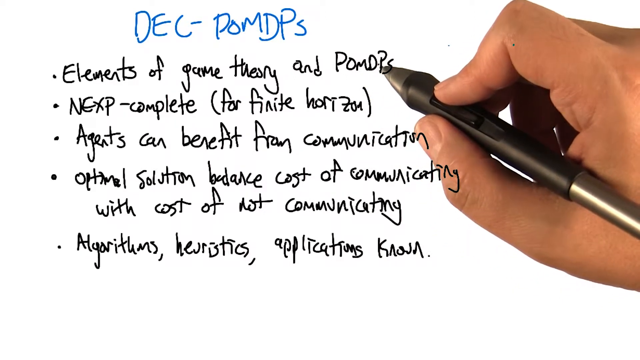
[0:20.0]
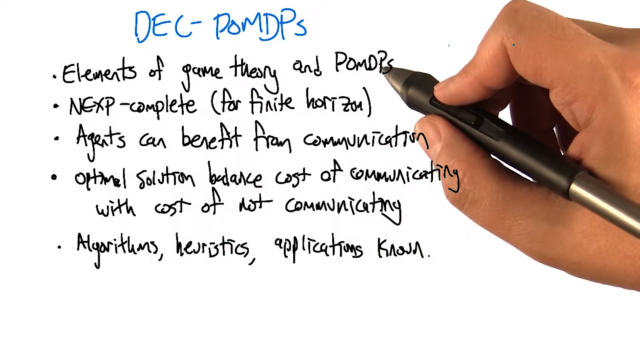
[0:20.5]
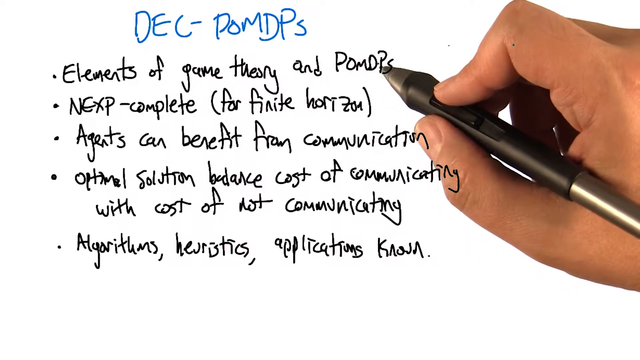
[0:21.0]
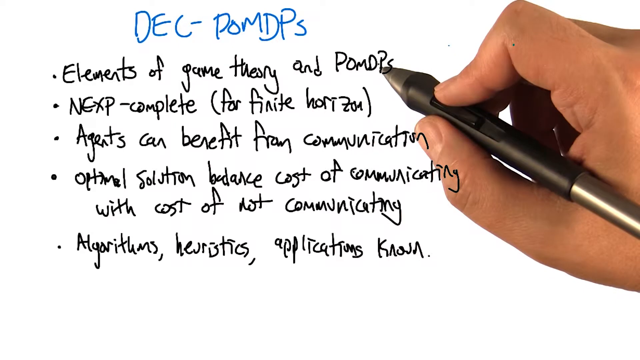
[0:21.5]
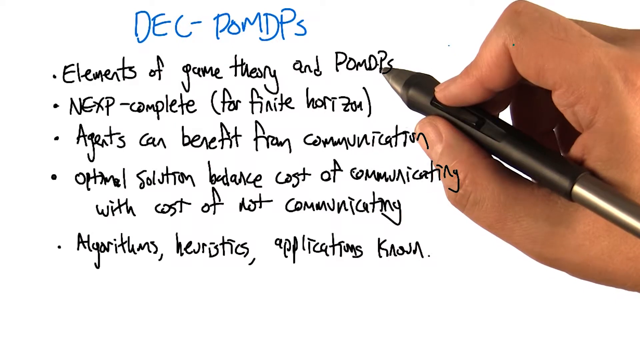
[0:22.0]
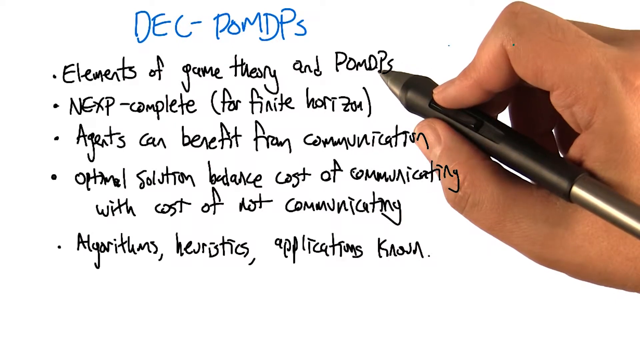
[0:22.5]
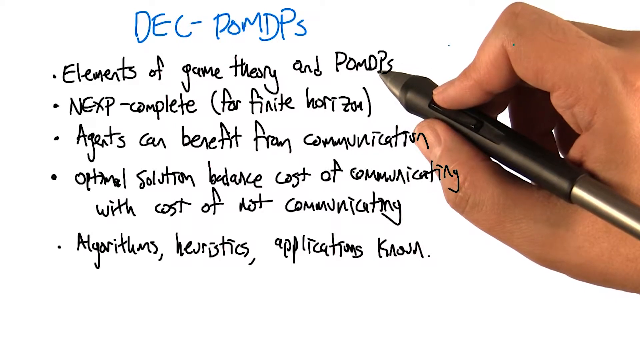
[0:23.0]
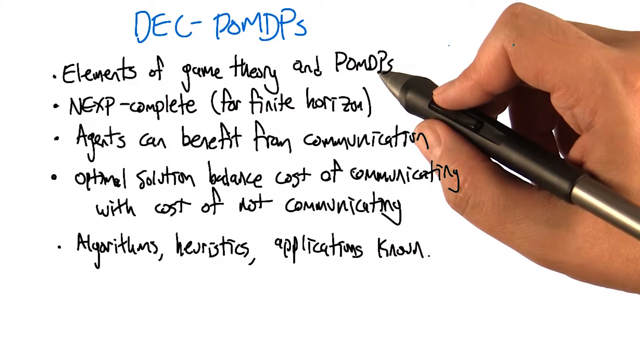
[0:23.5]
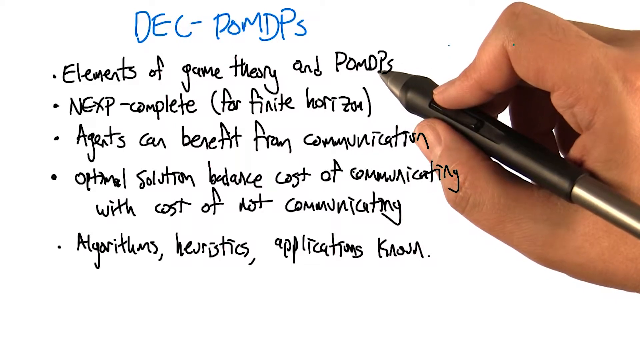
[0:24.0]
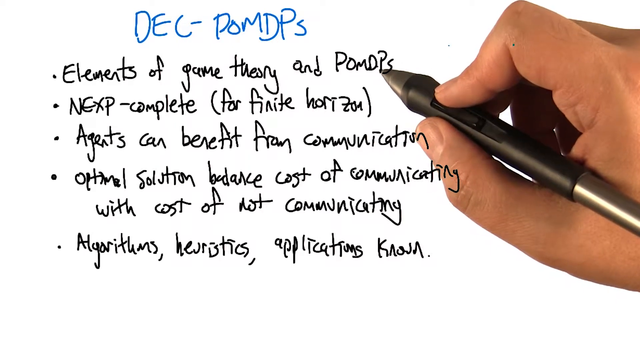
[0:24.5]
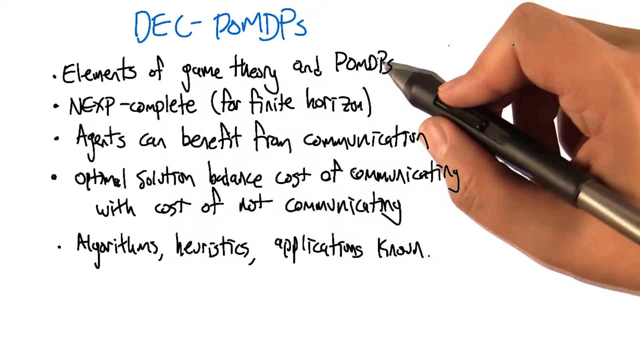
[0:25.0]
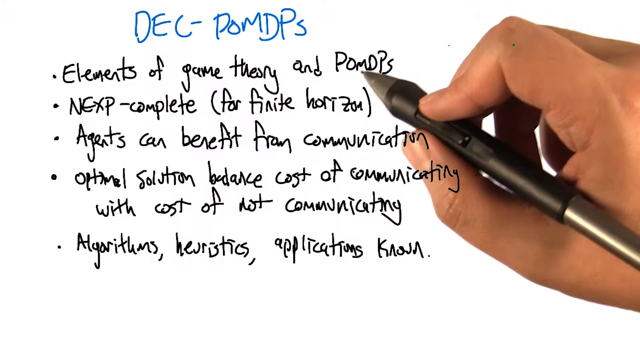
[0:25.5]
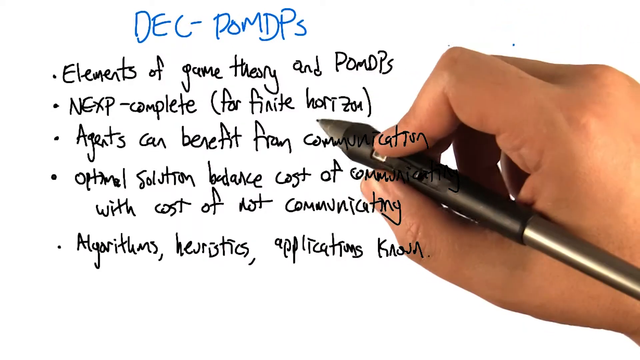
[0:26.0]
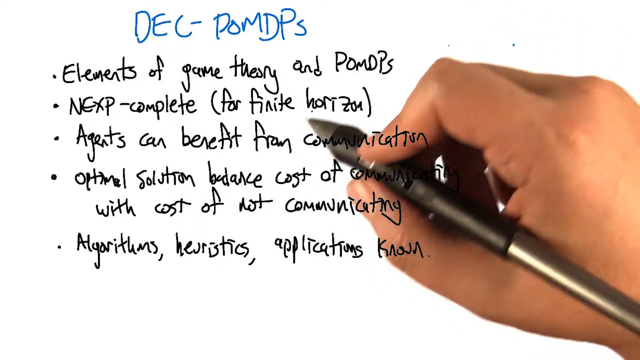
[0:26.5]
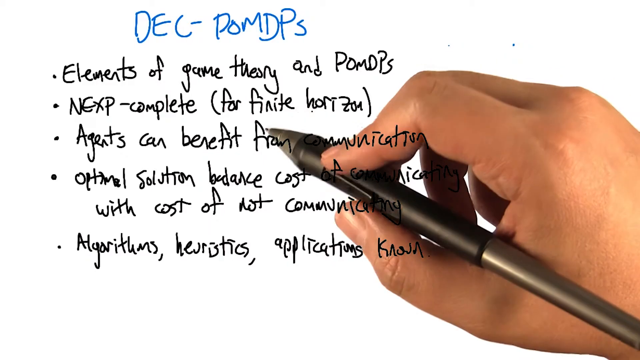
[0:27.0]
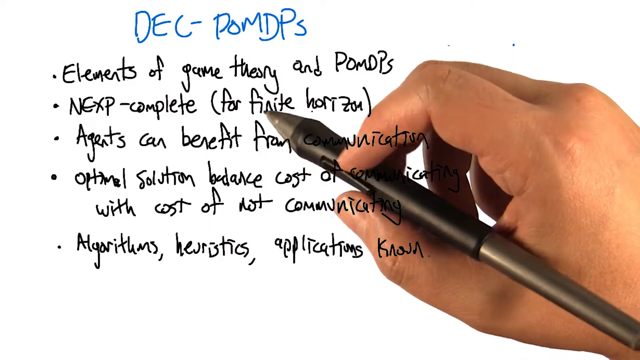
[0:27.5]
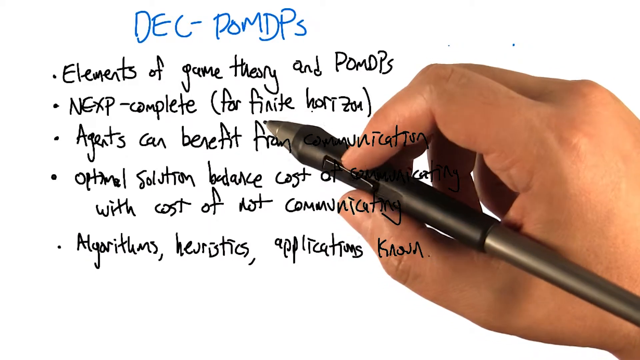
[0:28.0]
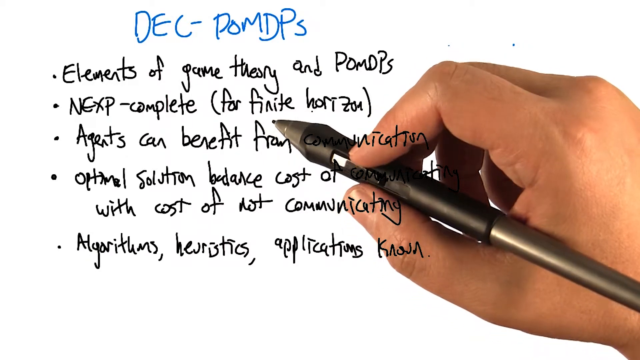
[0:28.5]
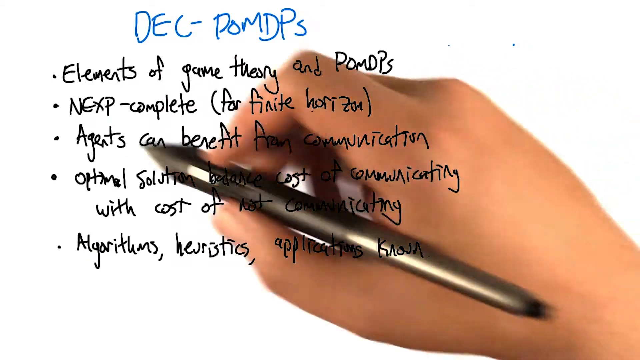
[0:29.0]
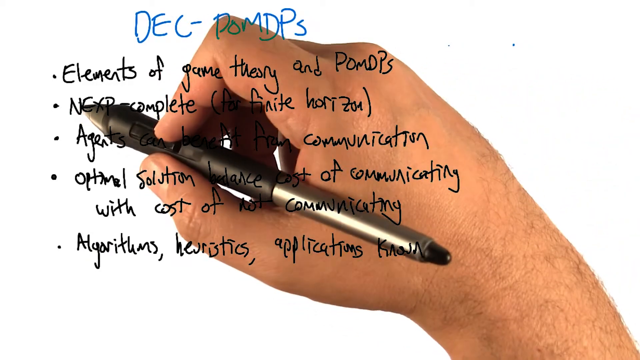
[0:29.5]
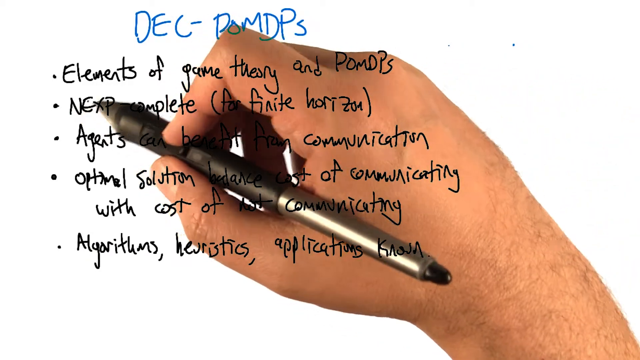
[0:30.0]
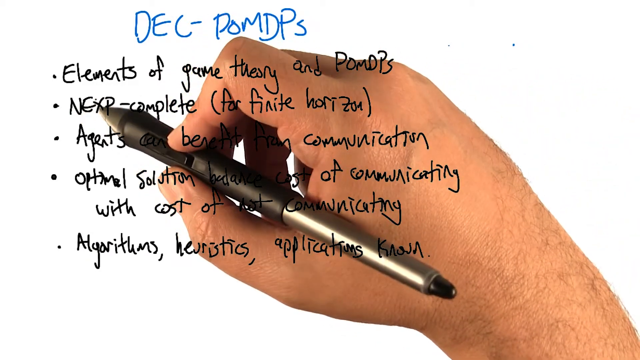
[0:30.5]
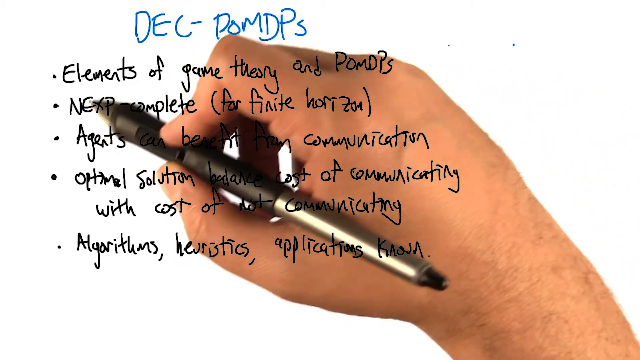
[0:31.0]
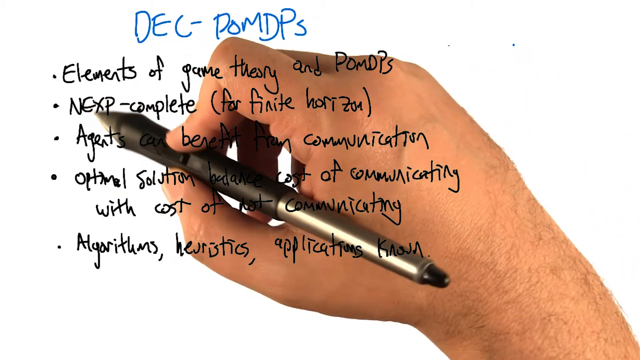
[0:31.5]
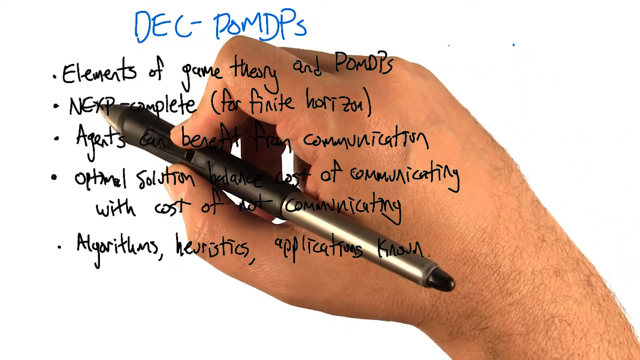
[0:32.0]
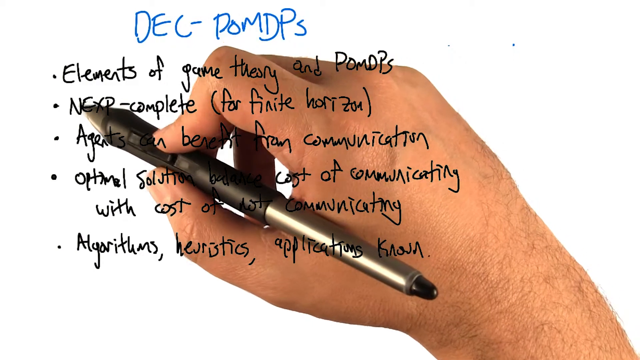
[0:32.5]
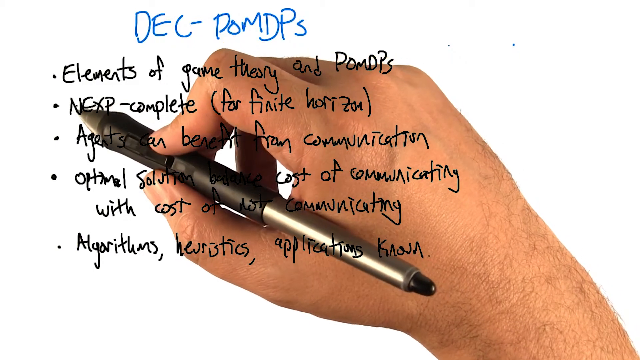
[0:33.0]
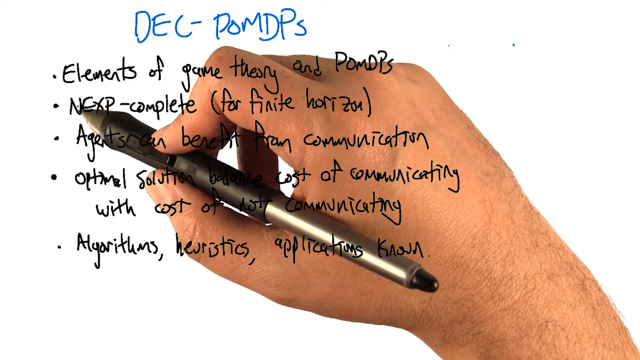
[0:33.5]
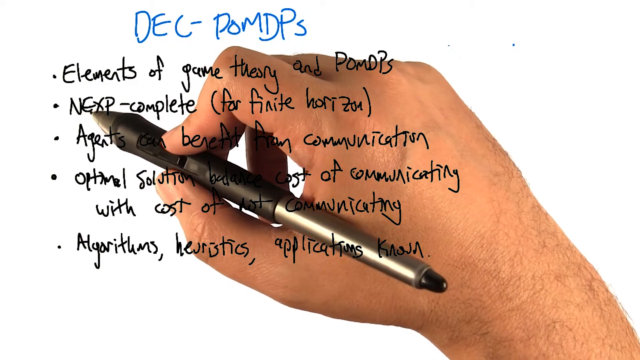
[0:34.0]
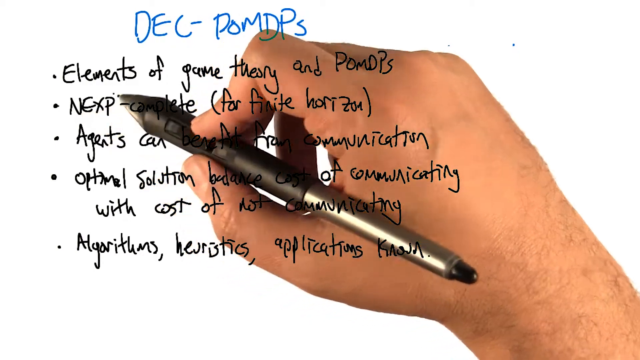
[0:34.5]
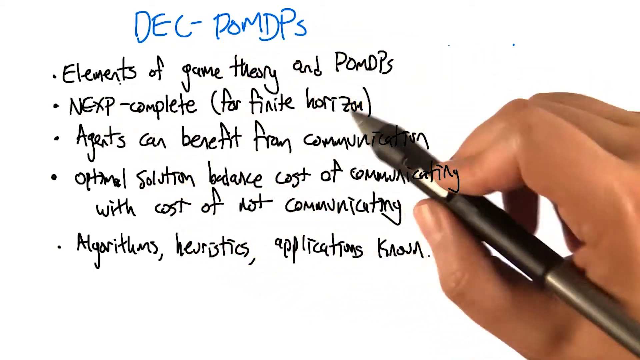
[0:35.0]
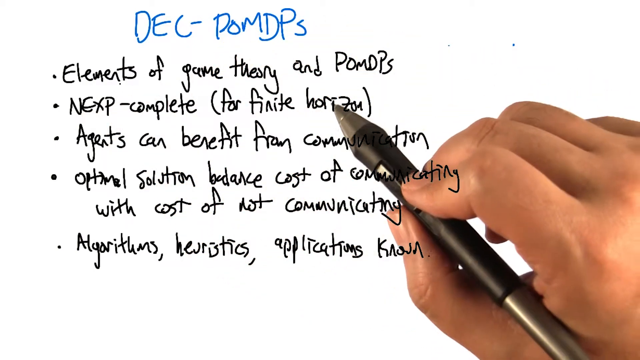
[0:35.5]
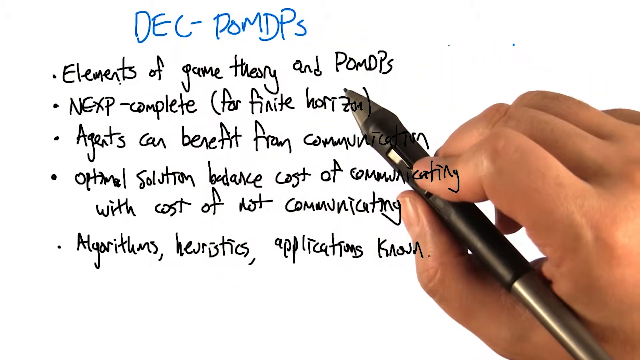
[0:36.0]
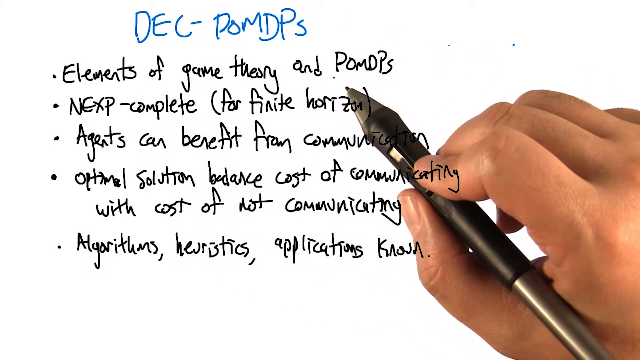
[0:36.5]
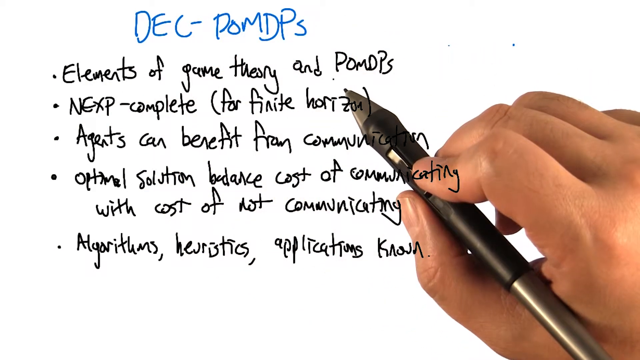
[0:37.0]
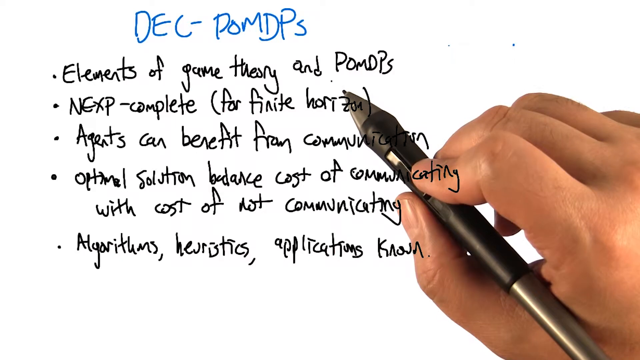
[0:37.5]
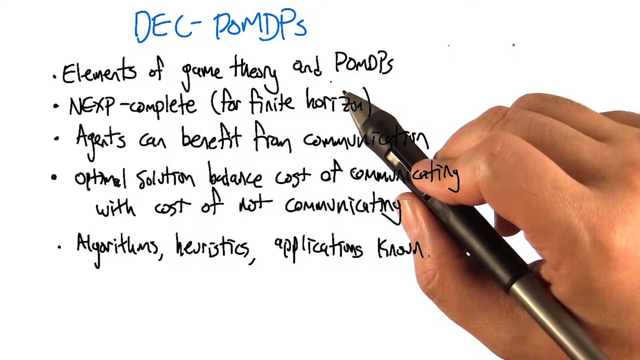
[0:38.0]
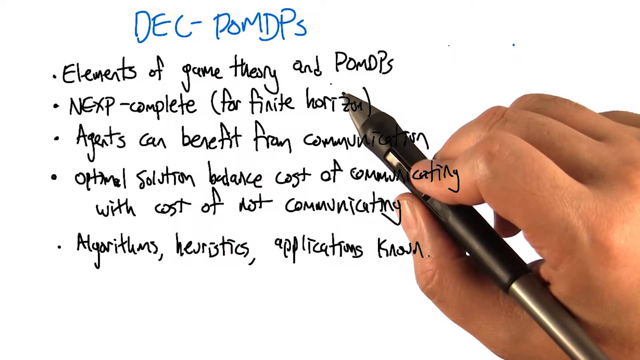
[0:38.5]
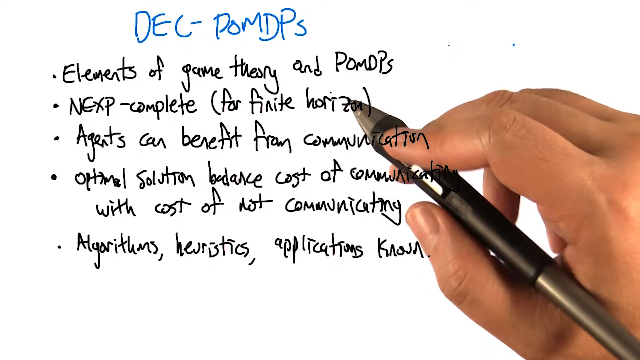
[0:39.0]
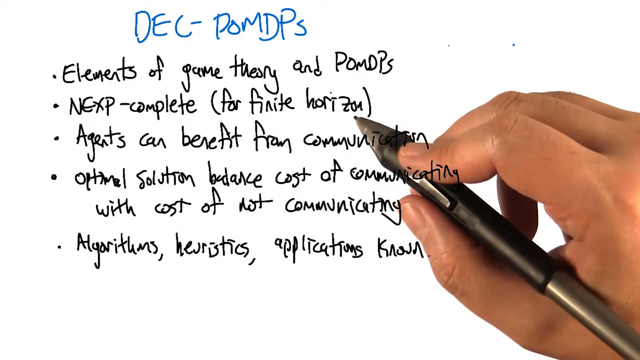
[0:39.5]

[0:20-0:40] The person moves on to the second point and goes back to link it with the earlier lines, apparently emphasizing how the sentences connect to each other. The handwriting looks like a medical doctor's writing, and it is difficult to read what is written. The words are written in point form as a list from top to bottom.